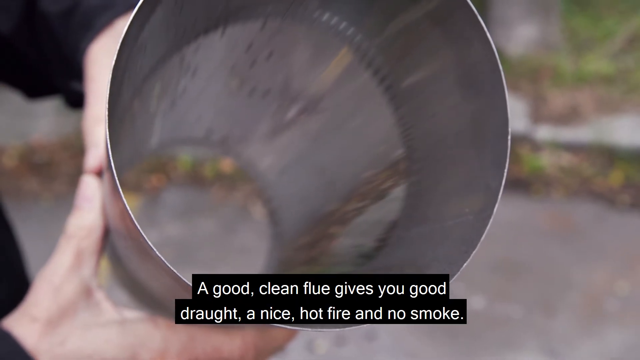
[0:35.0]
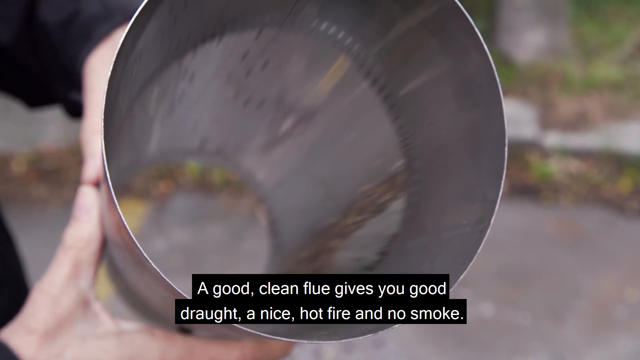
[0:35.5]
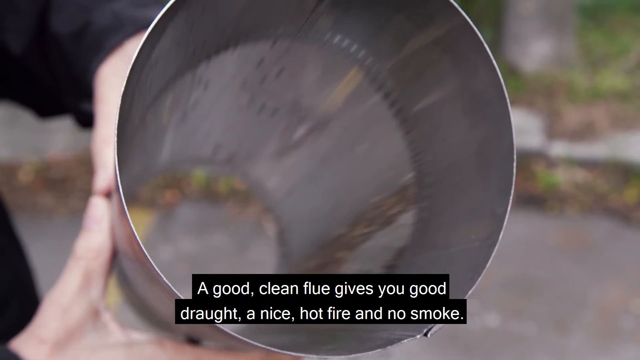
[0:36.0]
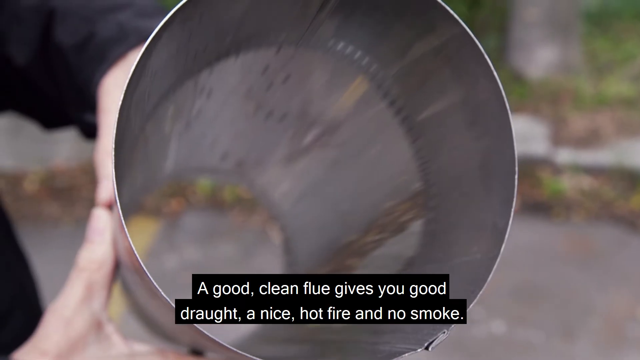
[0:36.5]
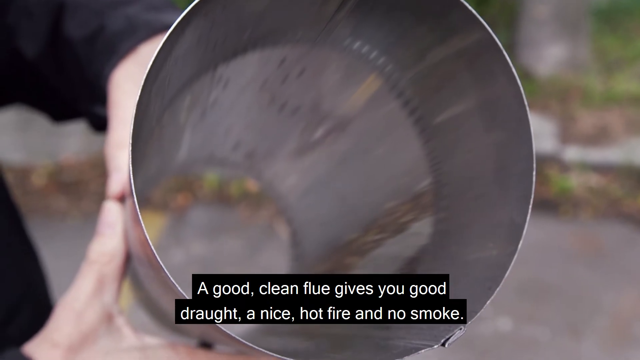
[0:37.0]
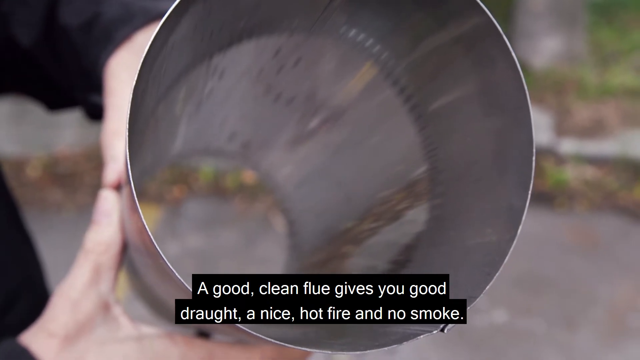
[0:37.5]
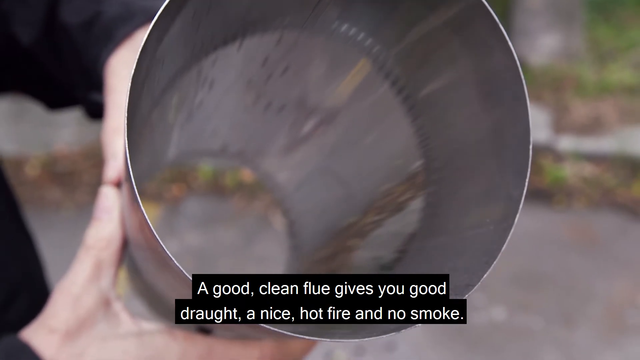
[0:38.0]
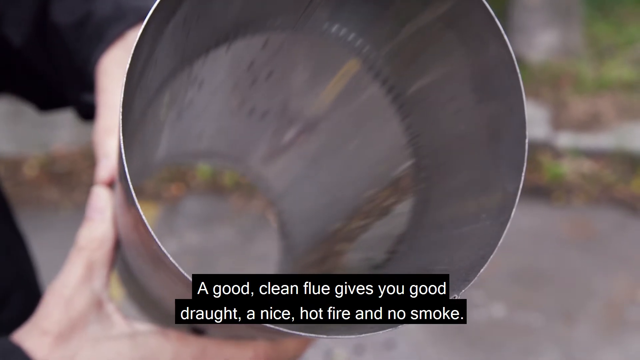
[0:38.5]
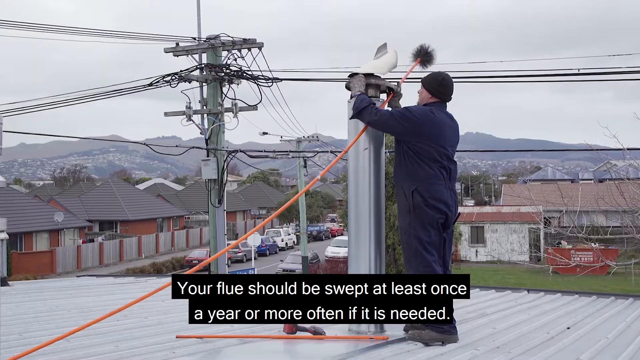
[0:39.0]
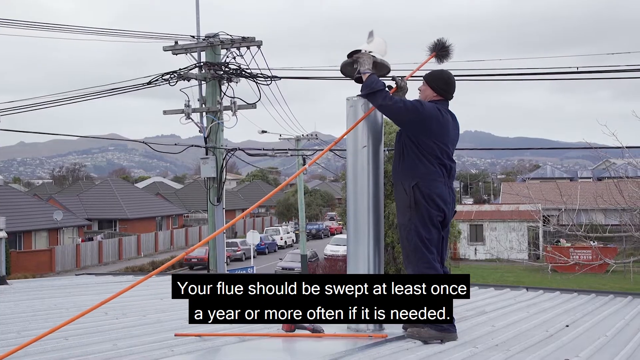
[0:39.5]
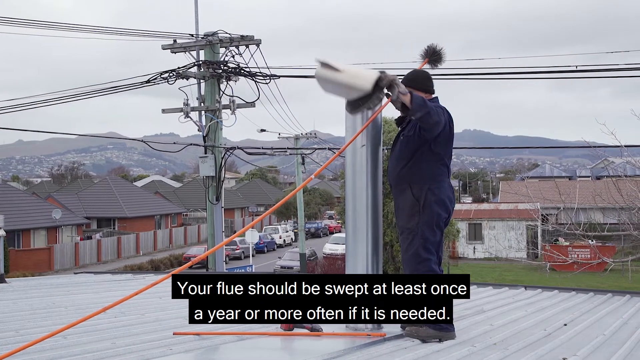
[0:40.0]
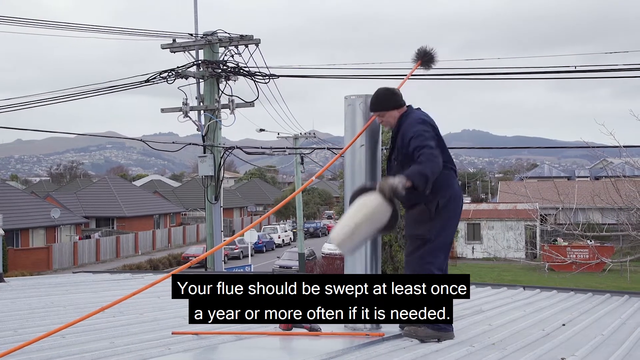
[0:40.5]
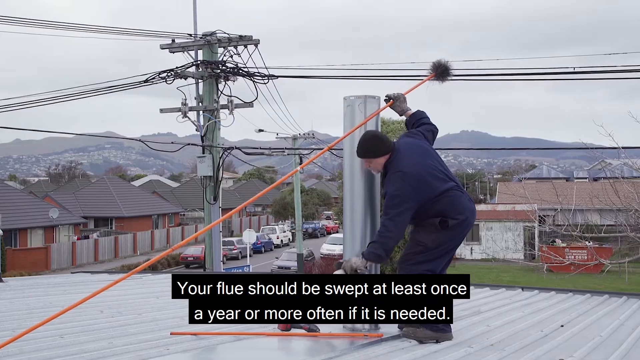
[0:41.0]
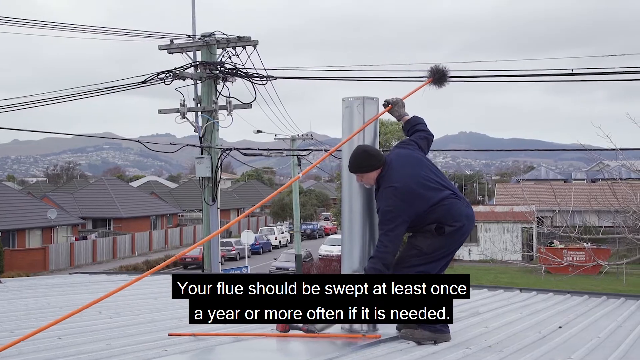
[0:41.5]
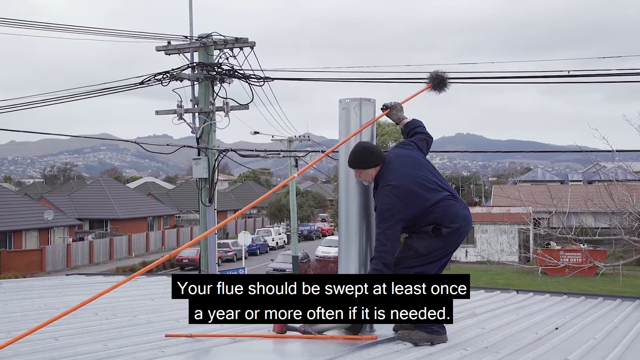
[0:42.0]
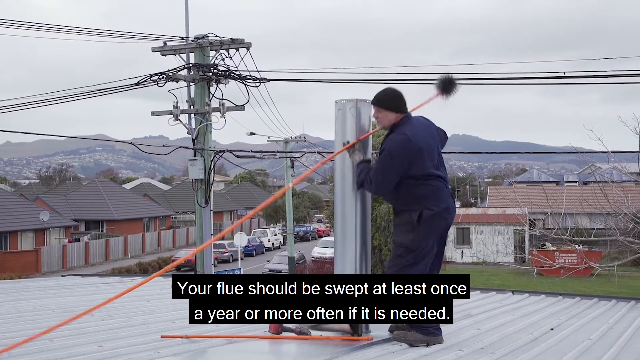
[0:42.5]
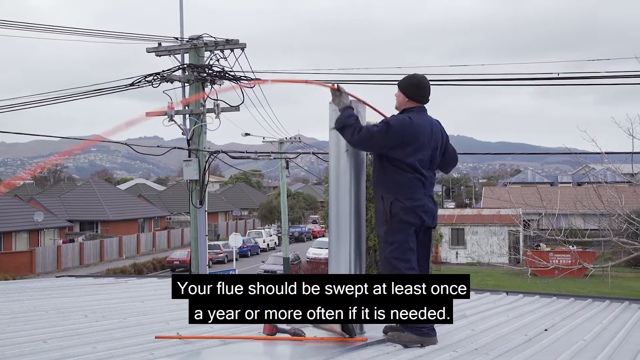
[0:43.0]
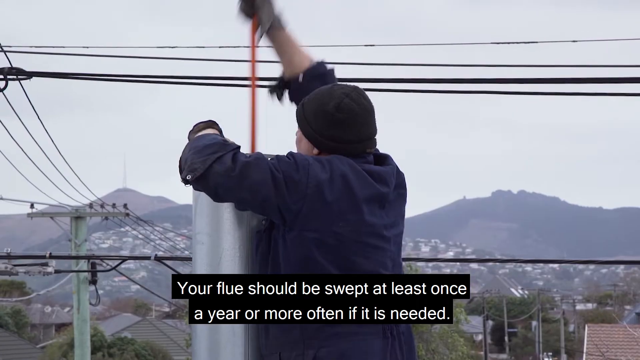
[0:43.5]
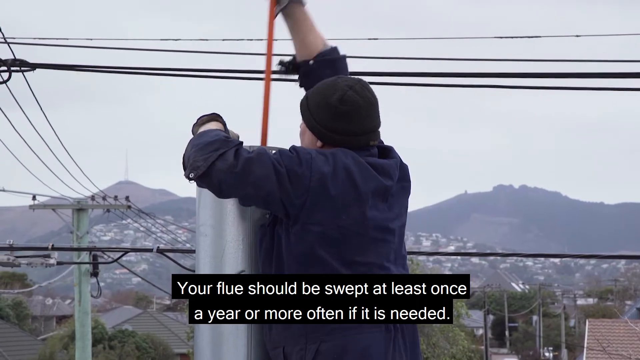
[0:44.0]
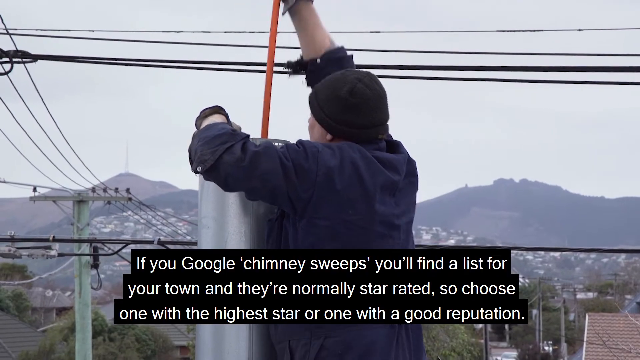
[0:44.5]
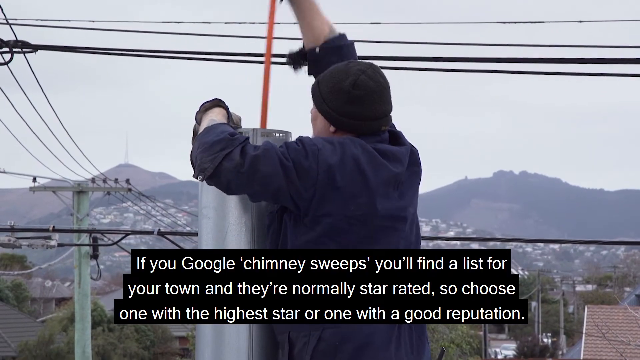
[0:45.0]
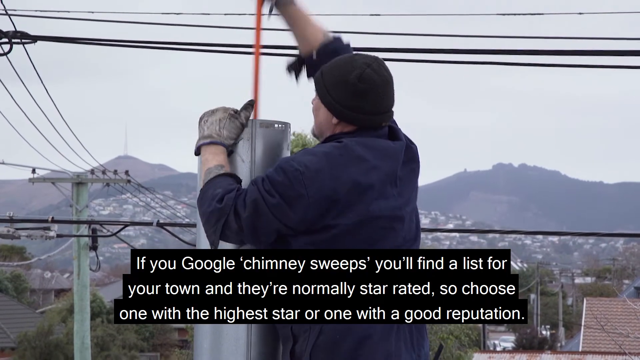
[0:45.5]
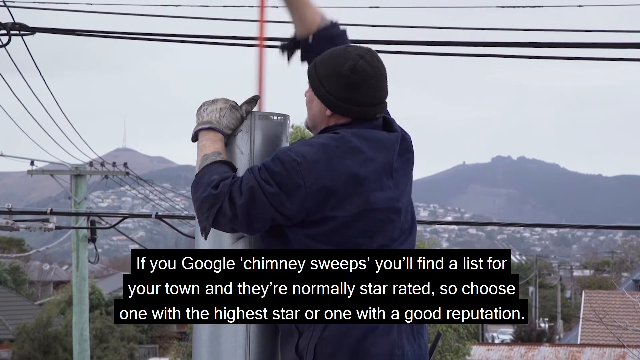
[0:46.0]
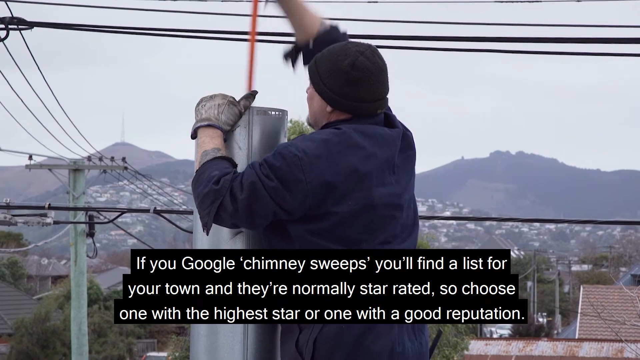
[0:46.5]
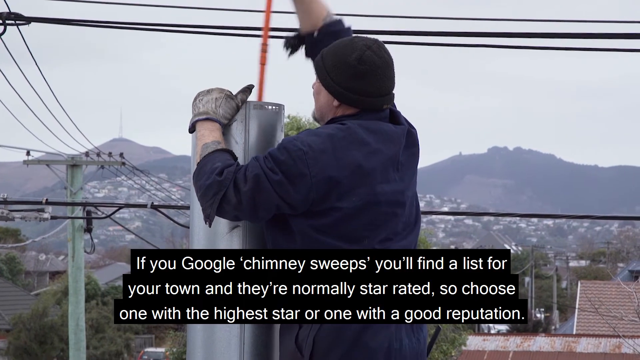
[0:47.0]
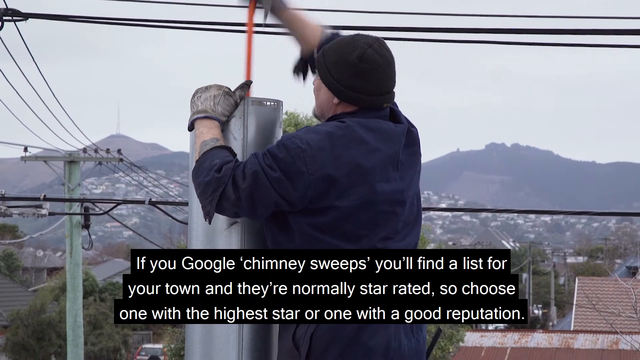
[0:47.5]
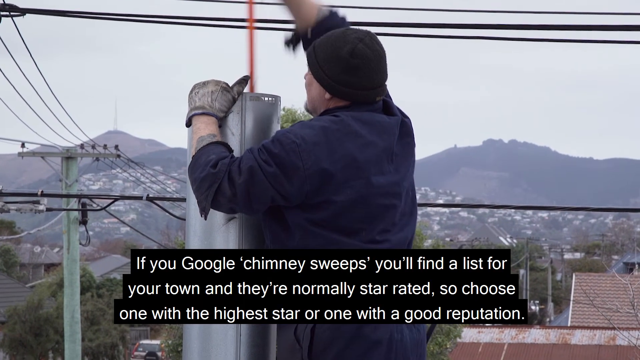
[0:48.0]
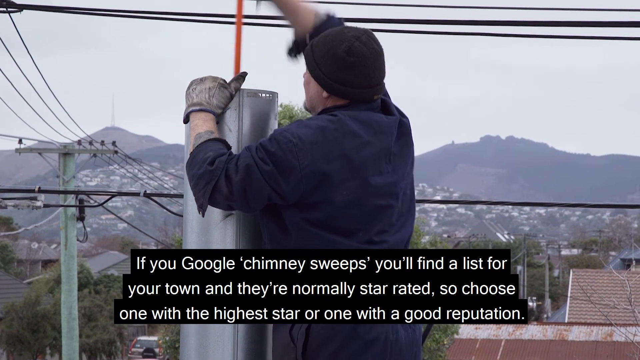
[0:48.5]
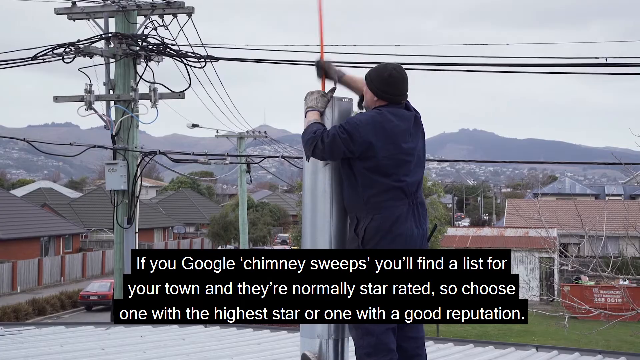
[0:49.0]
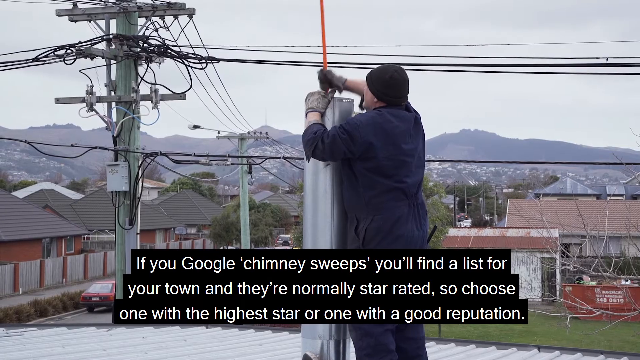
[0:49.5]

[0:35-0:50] The clear, shiny cylinder is shown with a subtitle at the bottom: "a good clean flue gives you good drought, a nice hot fire and no smoke." This flue looks very clear, shiny and pure, apparently a healthy flue in contrast to the previously shown one, which apparently was a bad flue, really grey and very rocky looking. Next, a man stands on the roof of a house or possibly a building that has a chimney. He holds a giant orange wire with a fuzzy, spiky tip that looks like a chimney sweeper for cleaning out the chimney. He wears a black cap, a black jacket and black jeans; it looks like it is probably cool outside. In the background are several red brick houses with black roofs, though none of their chimneys can be seen, and a mountain skyline. A giant electrical pole stands to the left of the man, with many wires coming in from the left, right, front and back, and there is a red dumpster can at the bottom right. The man bends down, apparently having taken the cap off the chimney, and uses the tool to pump up and down, apparently to clean out the chimney. He constantly moves it up and down, and his gloves become visible: they are grey-white and camo colored.